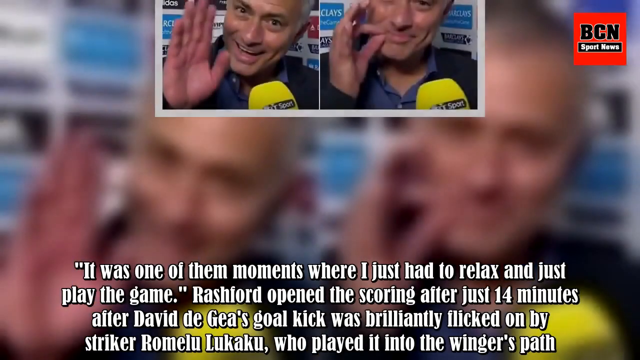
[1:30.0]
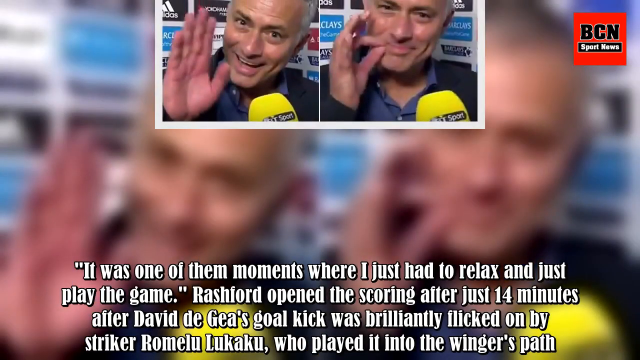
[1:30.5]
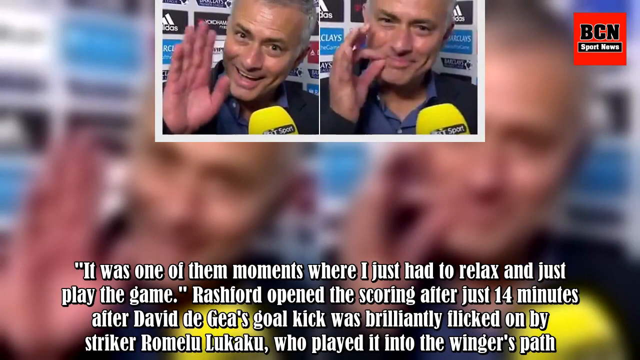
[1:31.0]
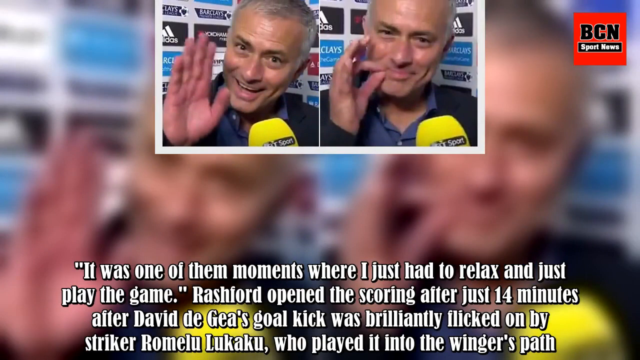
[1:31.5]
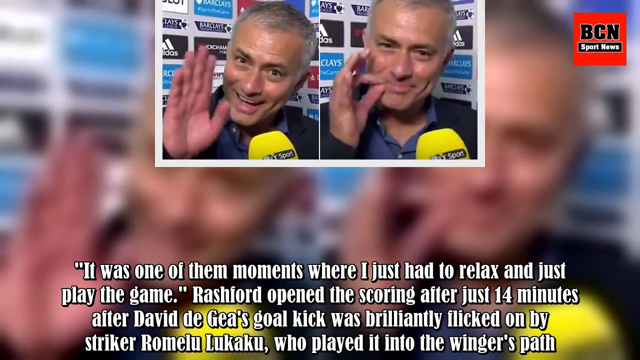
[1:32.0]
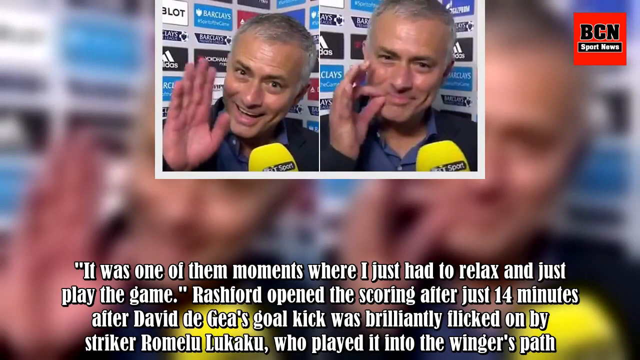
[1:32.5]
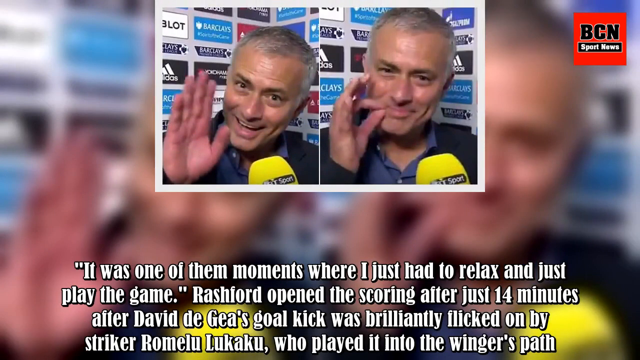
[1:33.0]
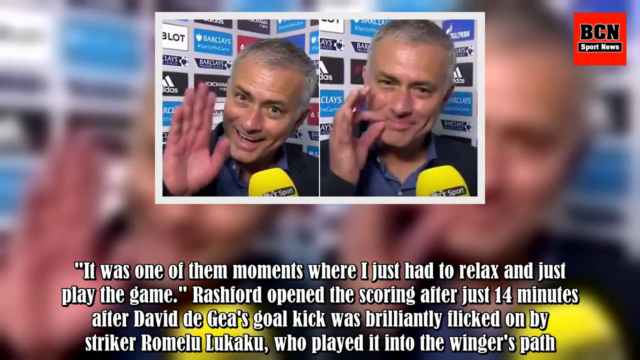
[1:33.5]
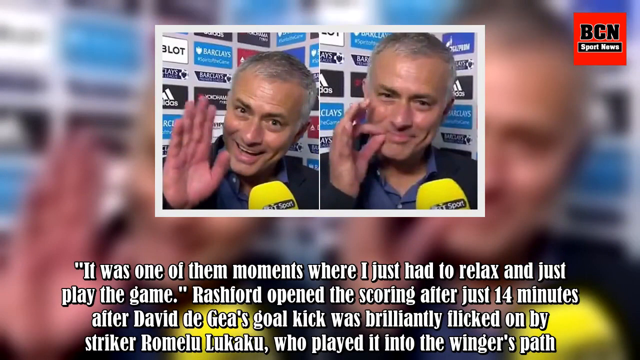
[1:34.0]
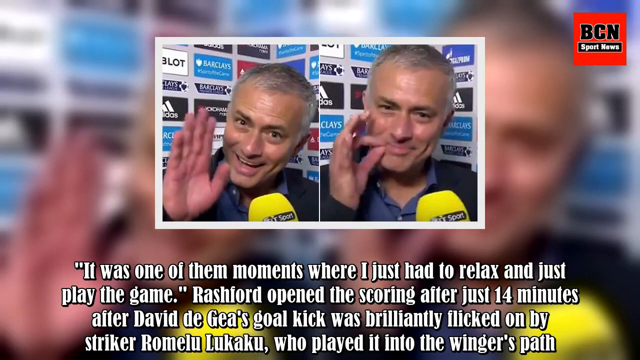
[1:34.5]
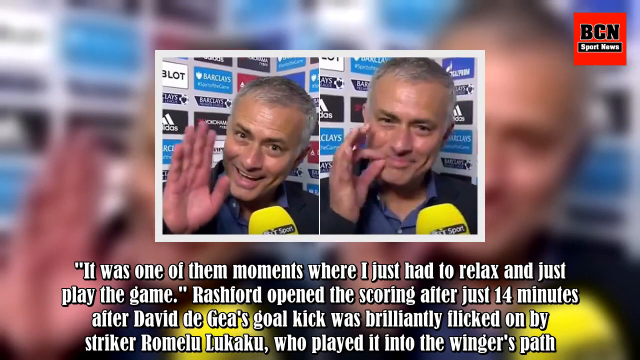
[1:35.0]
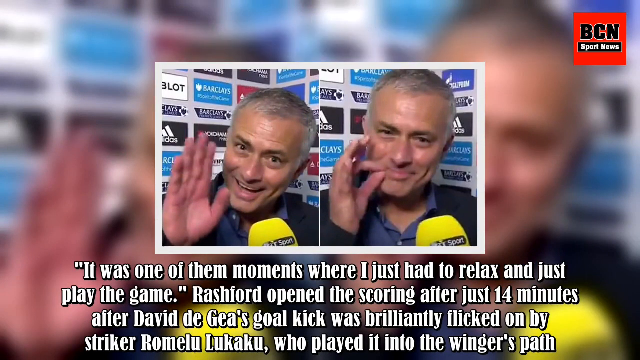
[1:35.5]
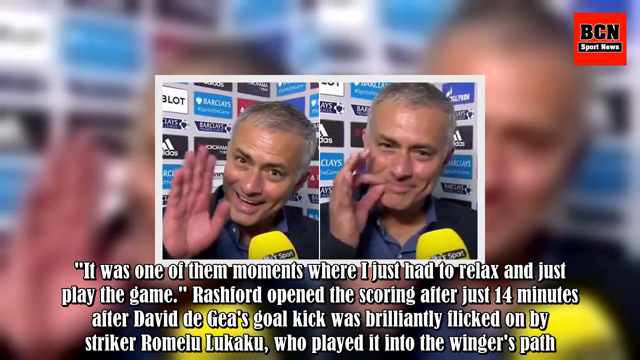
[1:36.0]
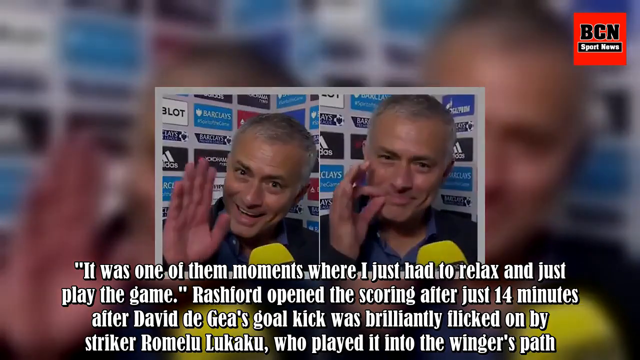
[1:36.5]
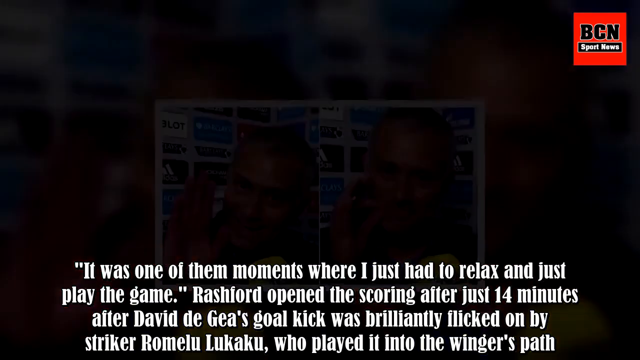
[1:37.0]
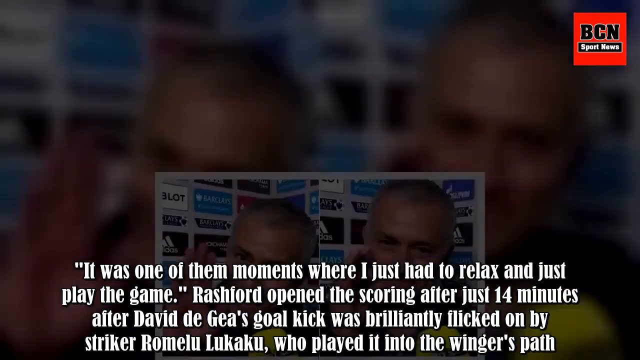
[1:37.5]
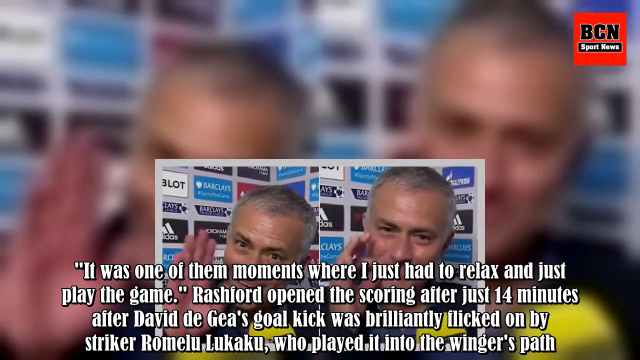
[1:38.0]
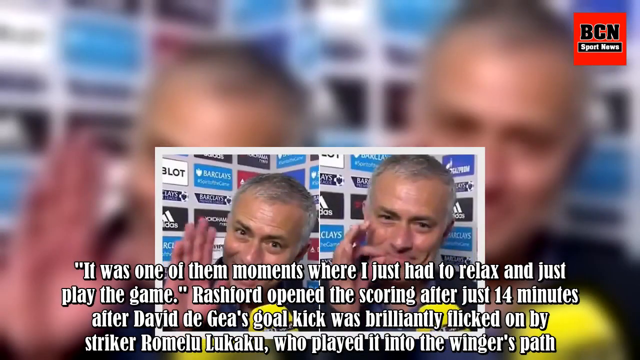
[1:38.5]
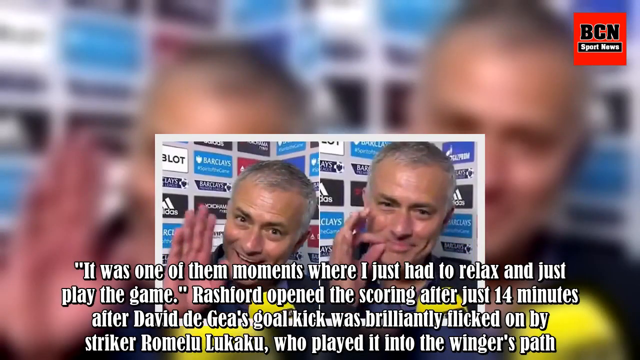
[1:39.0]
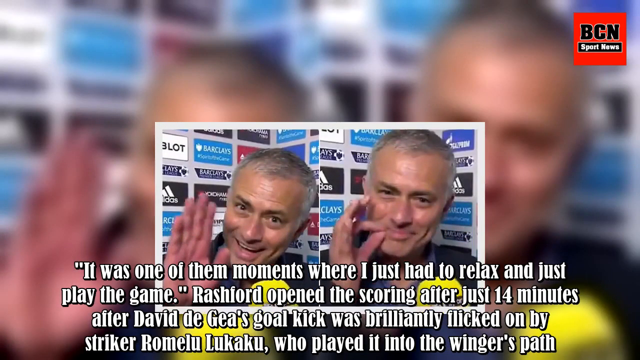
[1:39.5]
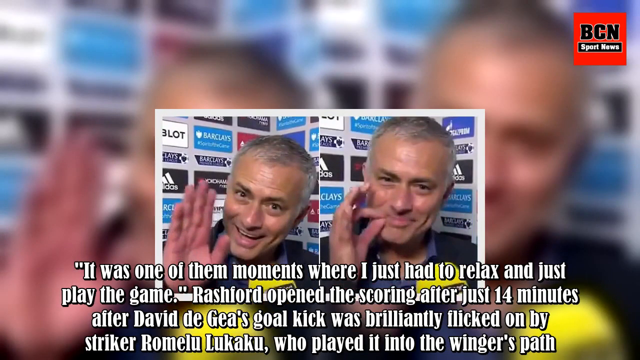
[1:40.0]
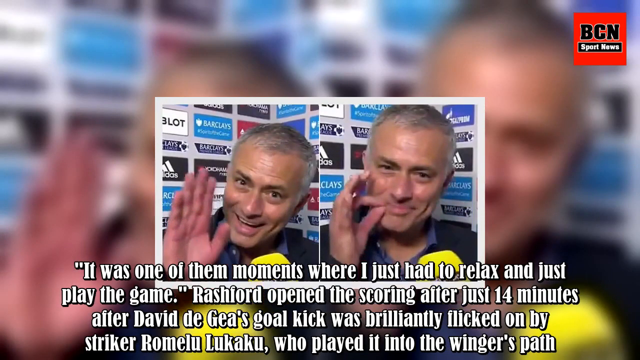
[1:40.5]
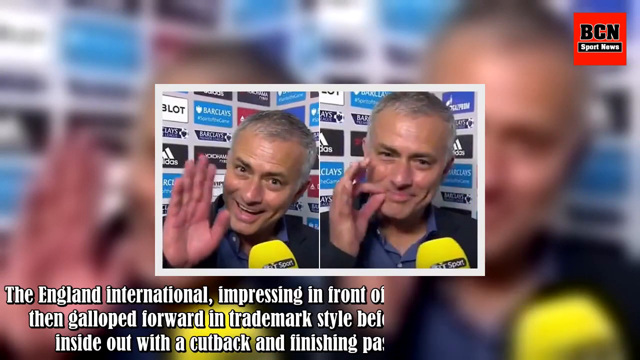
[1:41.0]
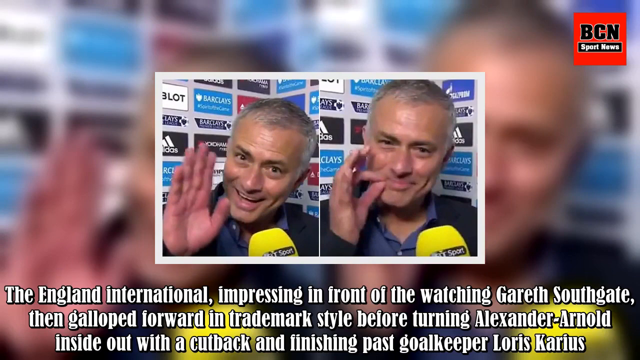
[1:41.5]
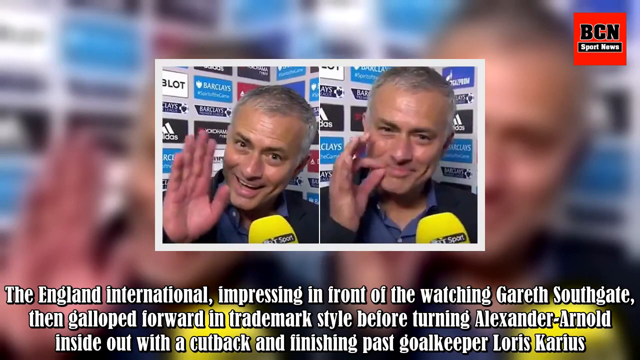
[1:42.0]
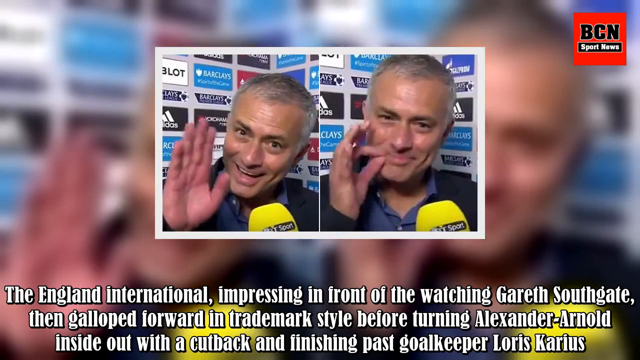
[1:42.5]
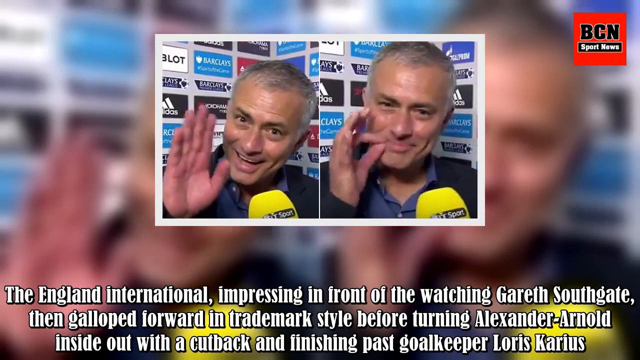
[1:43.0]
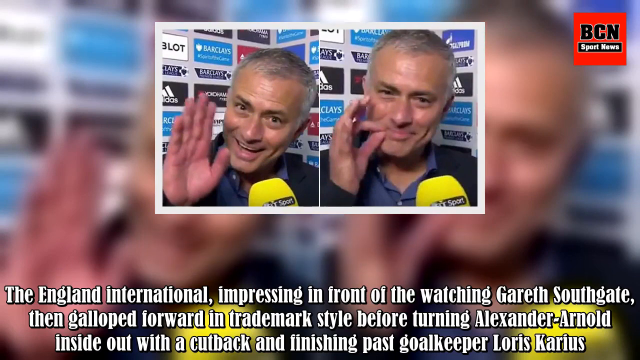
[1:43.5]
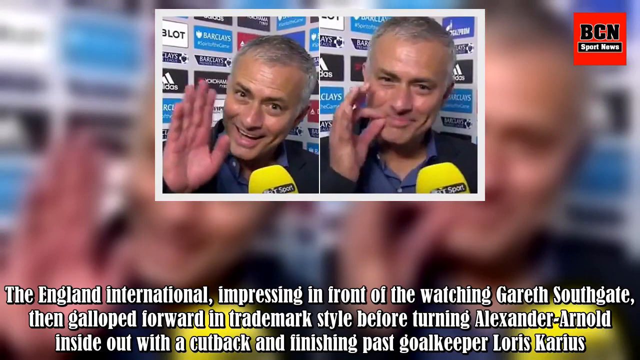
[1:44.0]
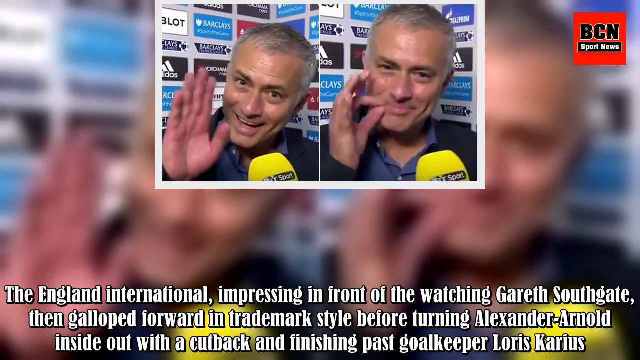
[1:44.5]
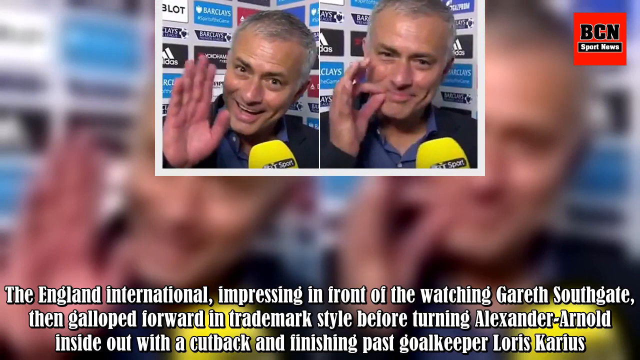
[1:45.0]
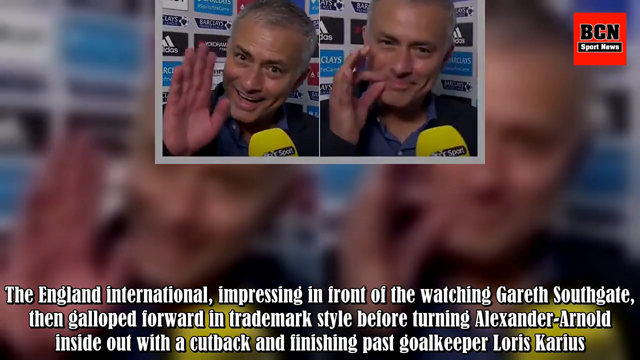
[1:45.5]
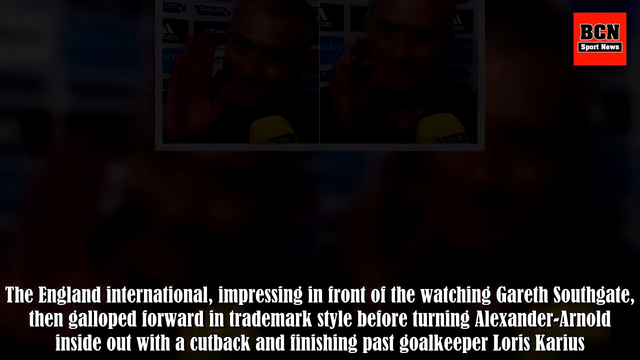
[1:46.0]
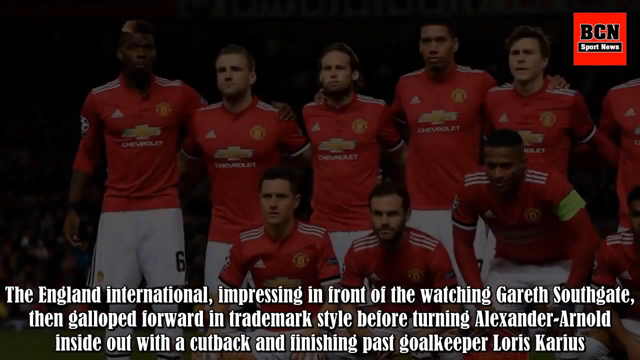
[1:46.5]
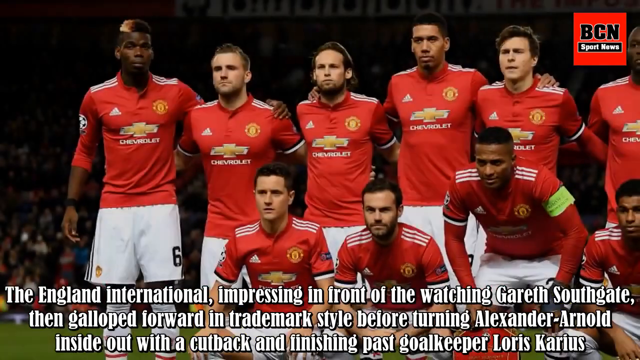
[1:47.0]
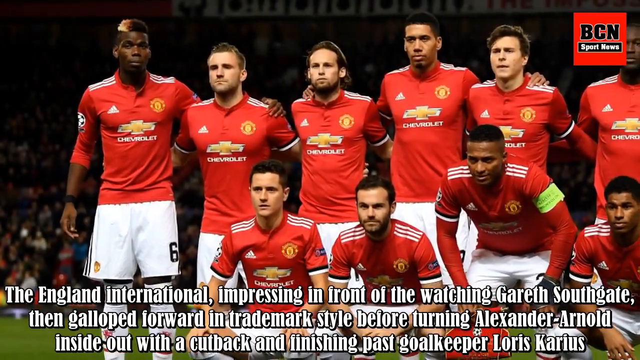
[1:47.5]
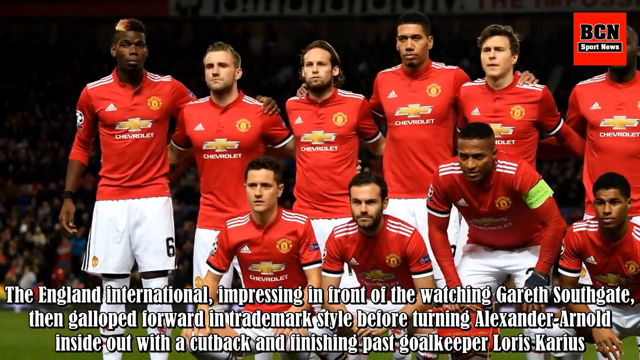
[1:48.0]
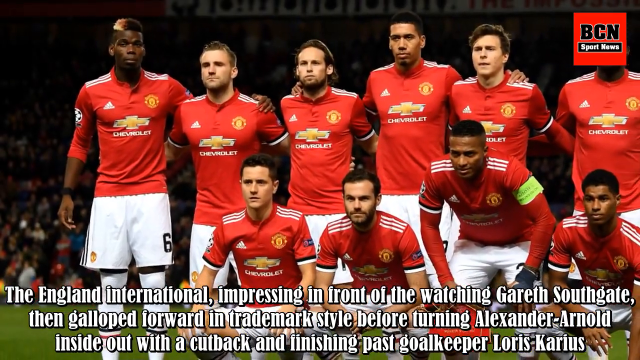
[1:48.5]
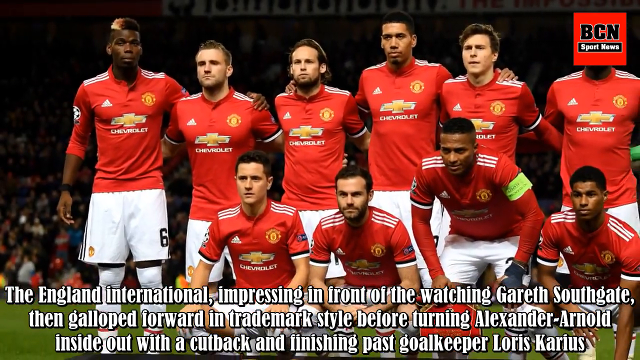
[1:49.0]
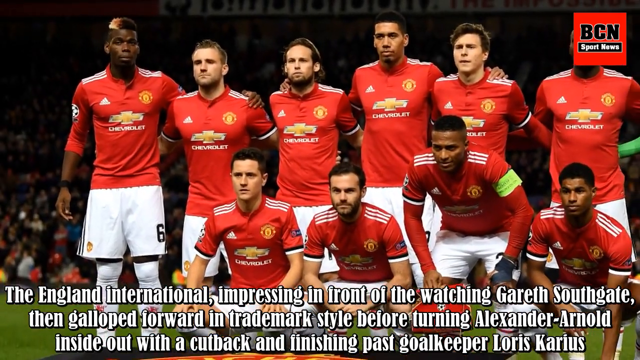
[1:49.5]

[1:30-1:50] The dual picture is in motion again, moving down. It has white borders, and text reads "It was one of them moments where I just had to relax and just play the game. Rashford opened the scoring after just 14 minutes after David DeGia's goal kick was brilliantly flicked on by," followed by another sentence and another paragraph. As the picture of the individual heads upward, something yellow, possibly a microphone, is near the person's upper chest area on their left-hand side. Behind them are what seem to be advertisements, such as Adidas and apparently Barclays. This fades out to a picture of the team, apparently taking a team photo: they are all posed, with four seemingly in the middle hunched over a bit and a row in the back, everyone with their hands kind of around each other. A crowd is in the background.